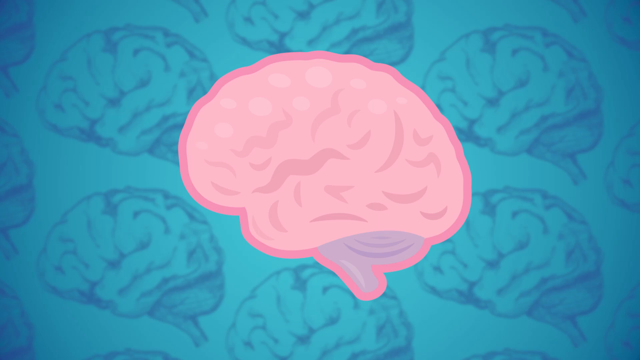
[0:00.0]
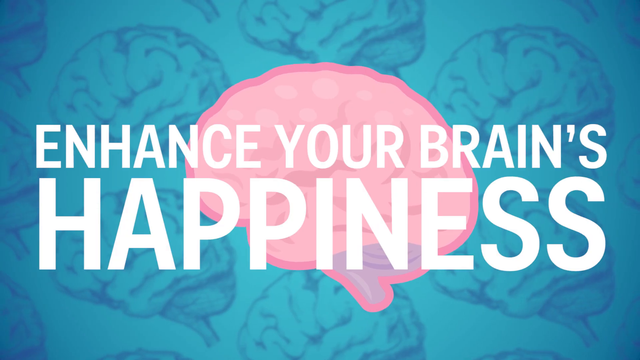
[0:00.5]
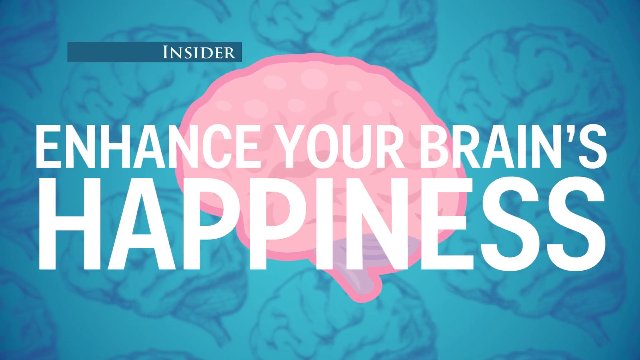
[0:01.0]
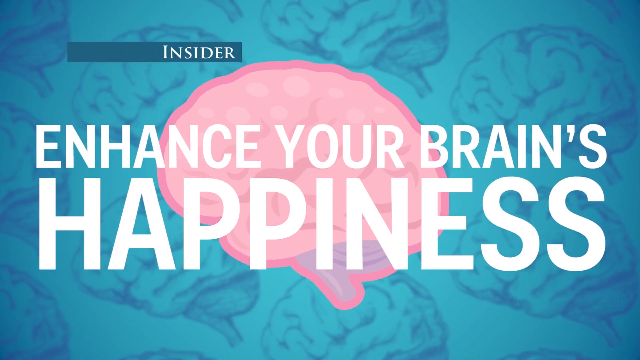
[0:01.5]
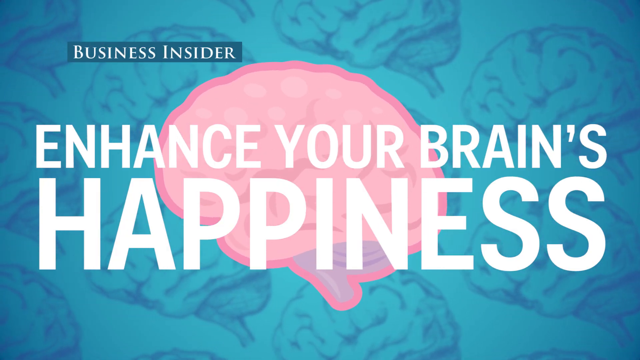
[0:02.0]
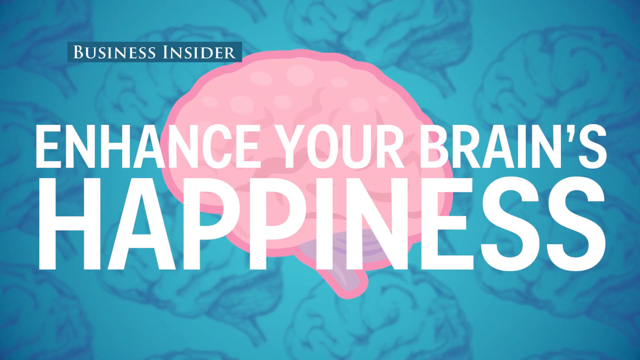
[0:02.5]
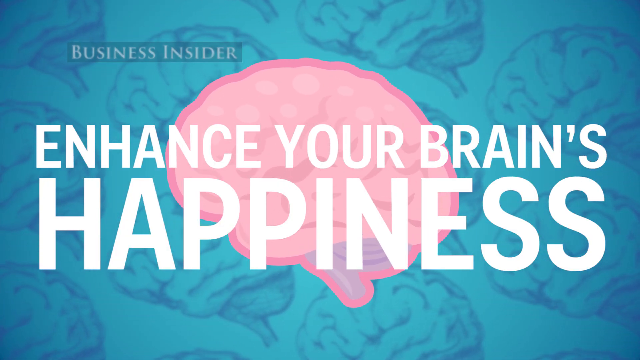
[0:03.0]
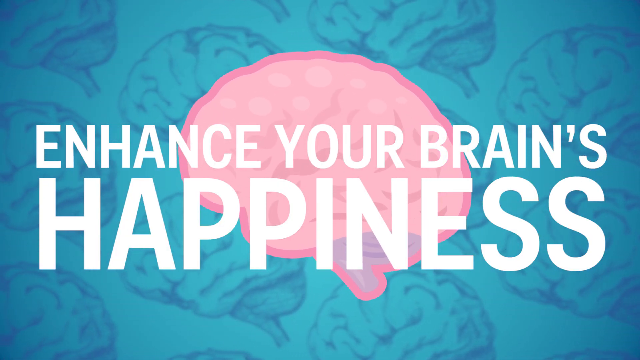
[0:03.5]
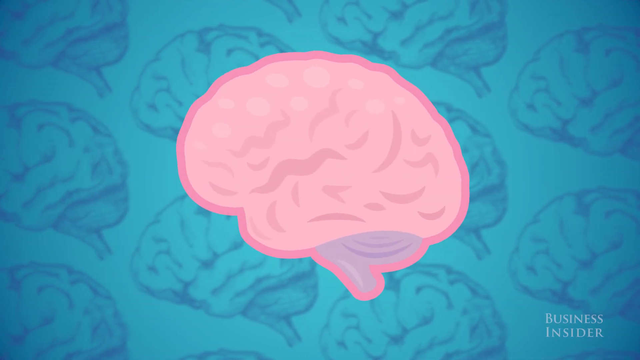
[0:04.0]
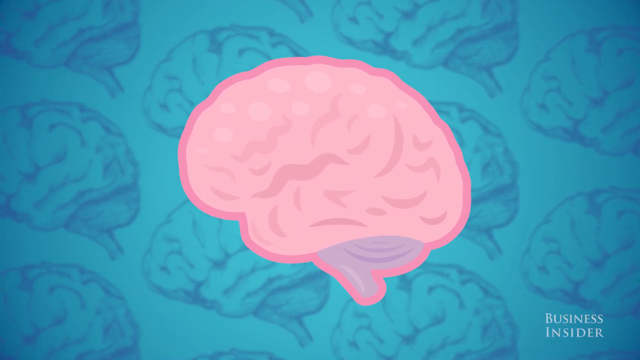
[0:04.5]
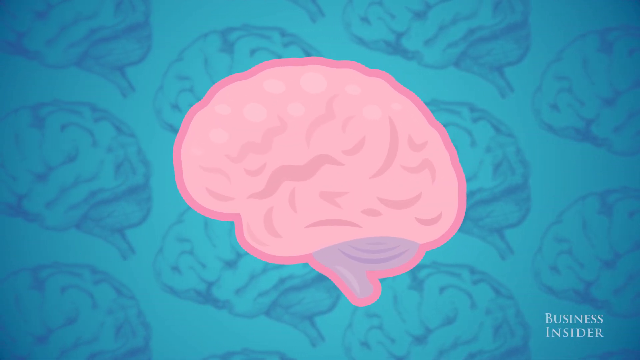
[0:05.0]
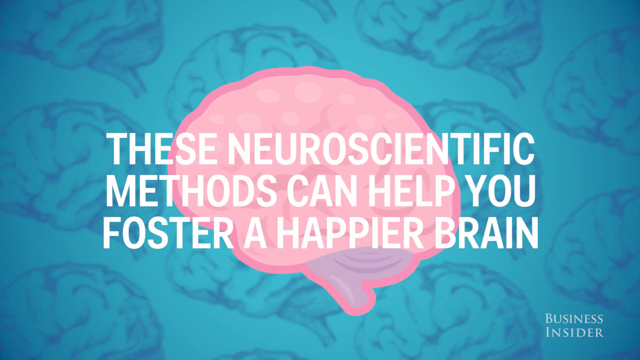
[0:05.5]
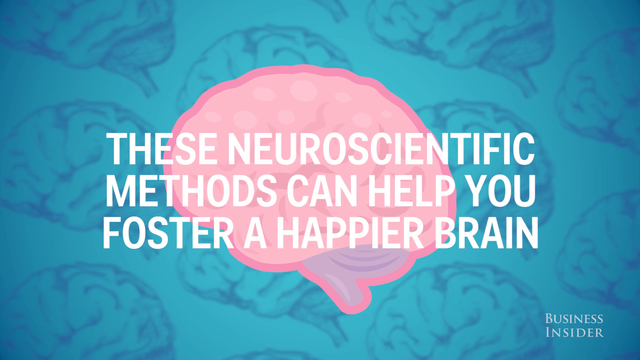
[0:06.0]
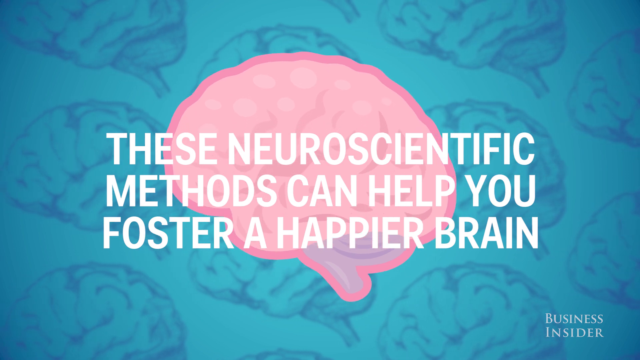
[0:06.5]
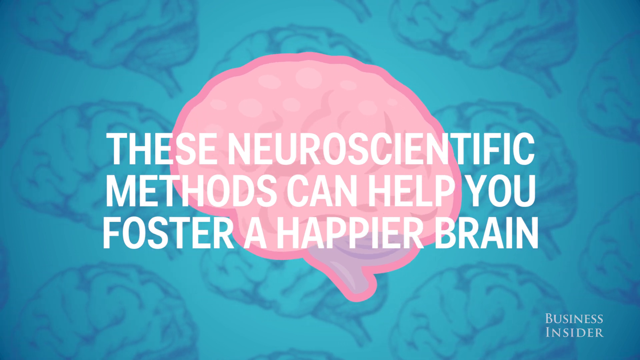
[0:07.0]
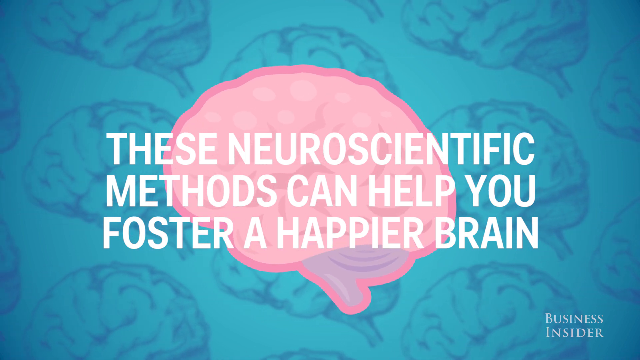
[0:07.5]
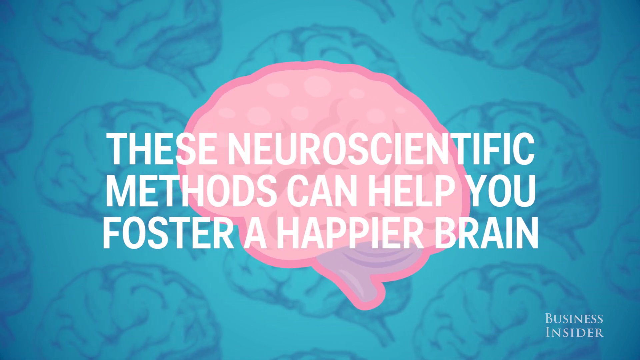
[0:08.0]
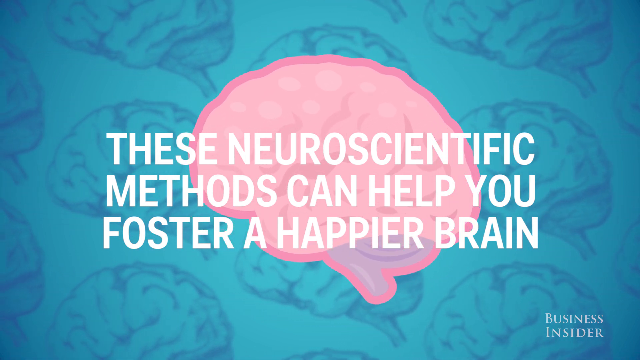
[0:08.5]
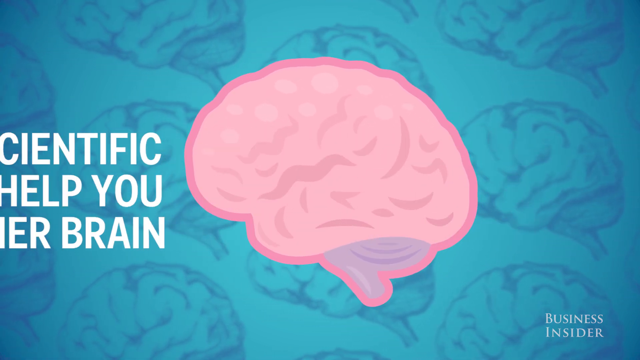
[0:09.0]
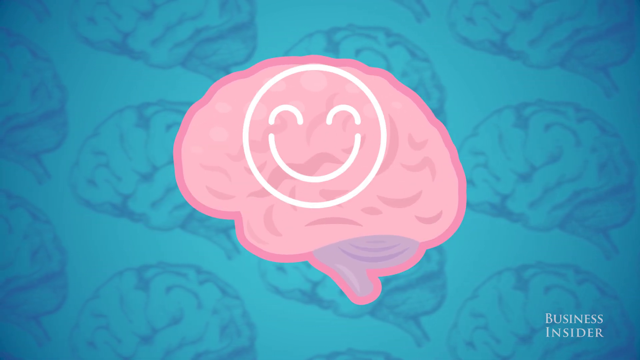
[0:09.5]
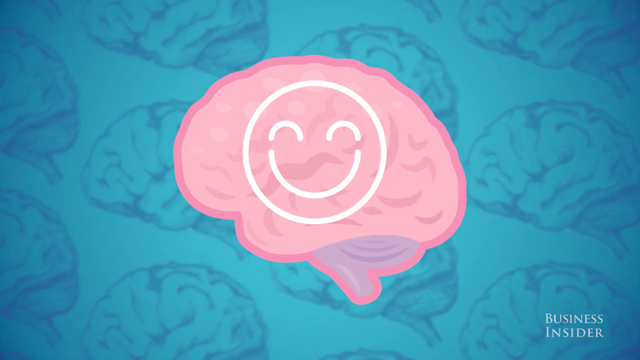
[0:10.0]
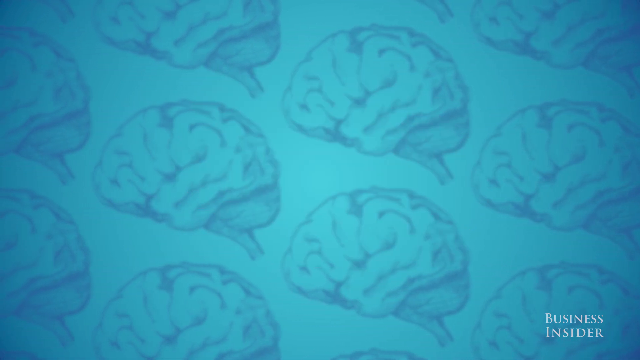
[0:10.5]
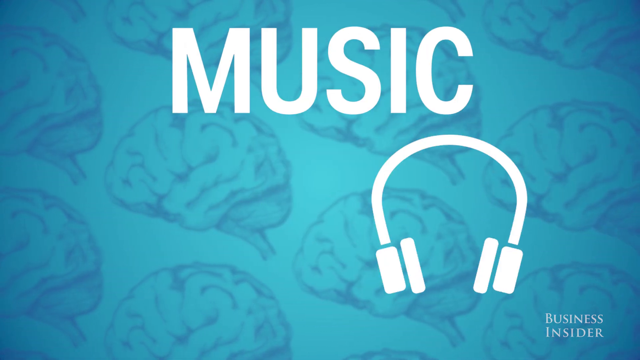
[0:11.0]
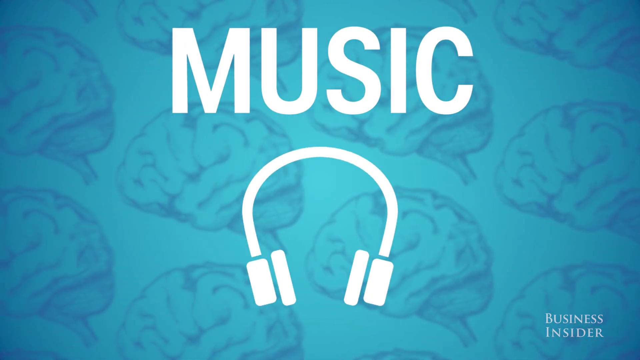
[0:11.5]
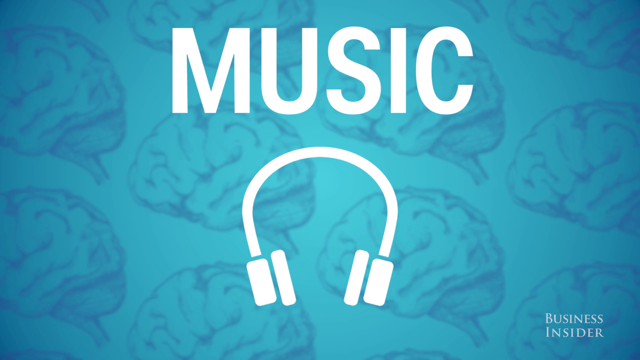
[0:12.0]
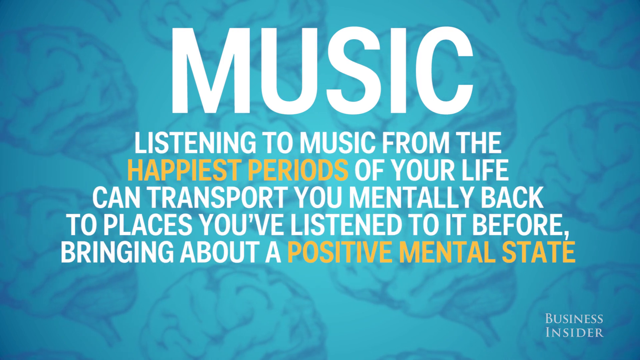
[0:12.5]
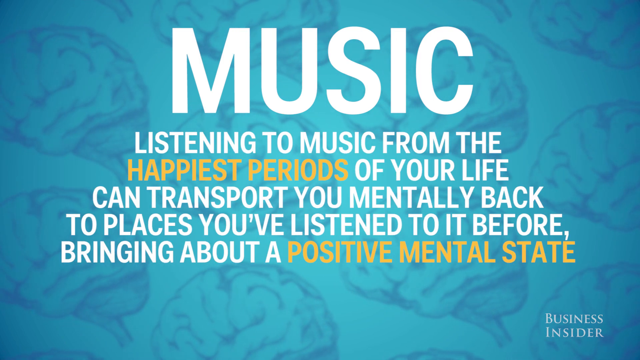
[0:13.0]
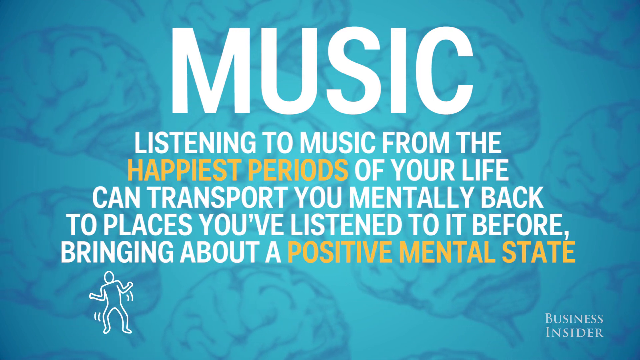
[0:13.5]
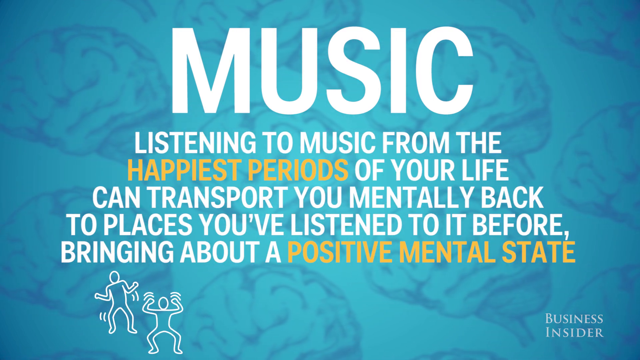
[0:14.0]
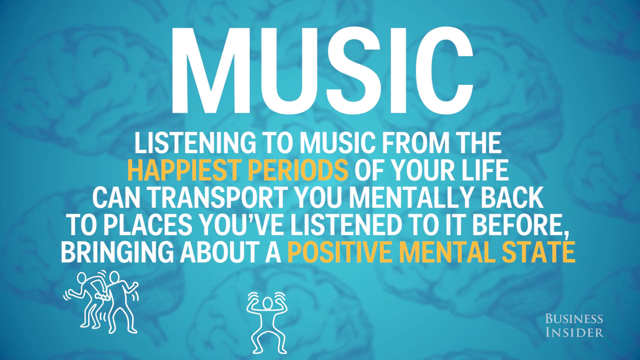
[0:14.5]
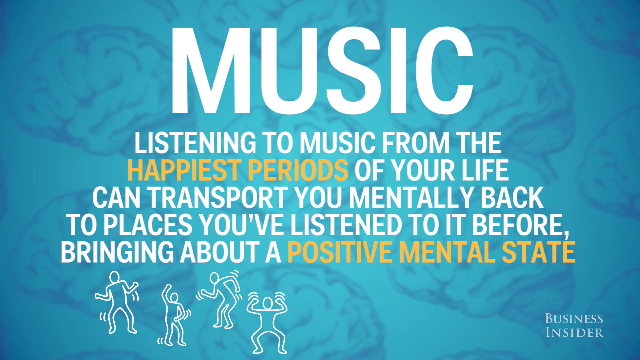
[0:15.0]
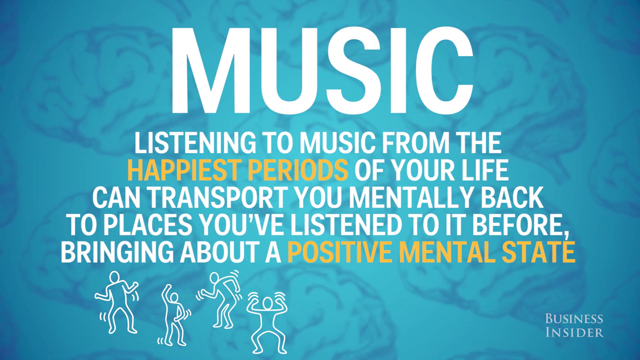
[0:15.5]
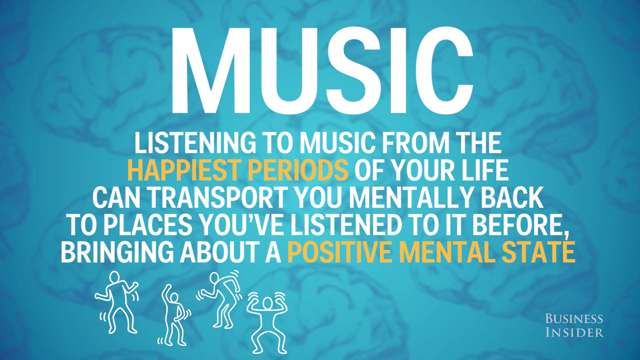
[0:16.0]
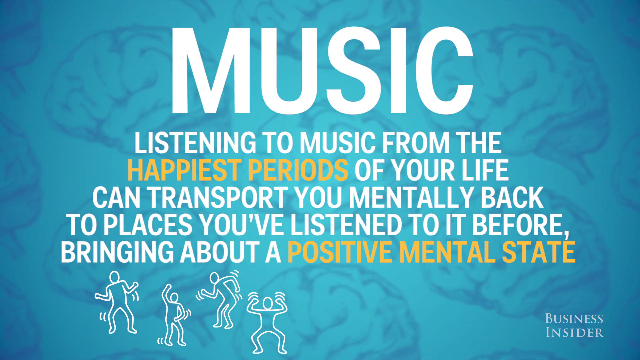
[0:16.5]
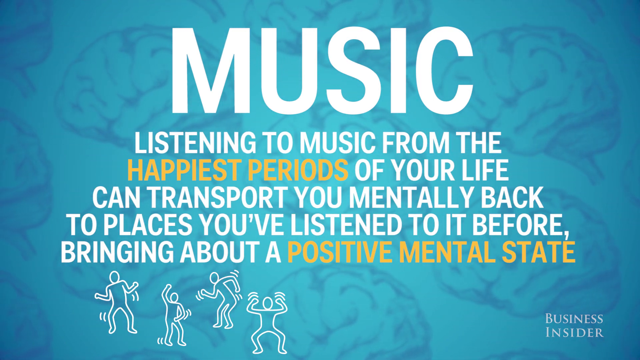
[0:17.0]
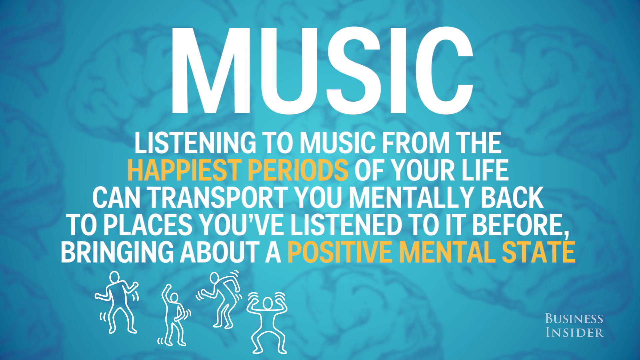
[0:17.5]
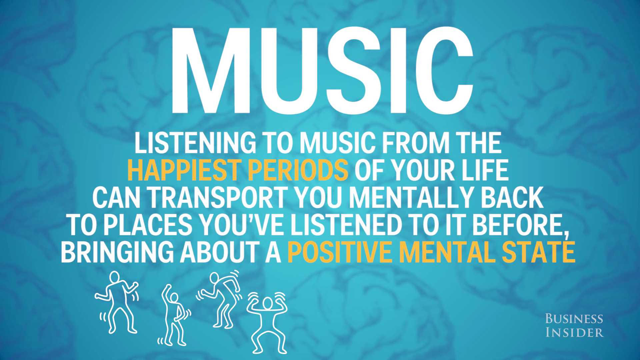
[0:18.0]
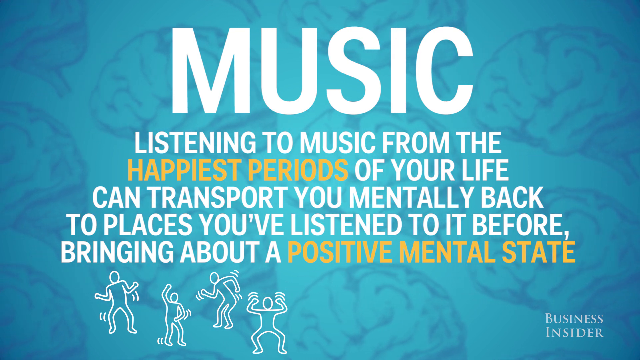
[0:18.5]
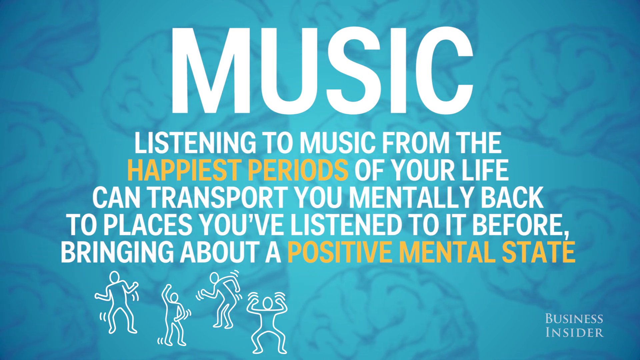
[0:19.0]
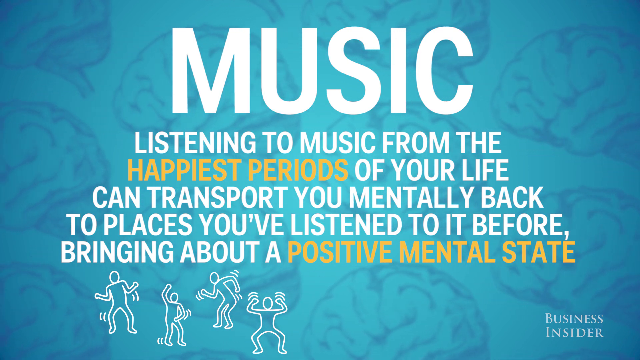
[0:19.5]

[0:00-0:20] A computer-generated drawing of a pink brain appears against a blue background, with at least six blue brains visible in full or partly cut off in the background and even more cut off in the corners. The pink brain is outlined in a darker shade of pink, and its bottom part is a pale purple, almost a purple with a tinge of gray. The title appears in white letters: "Enhance Your Brain's Happiness", along with "Business Insider". Next, white capital letters on the screen read "These Neuroscientific Methods Can Help You Foster a Happier Brain", with the pink brain and the blue background of blue brains still there. A white smiley face pops on screen, drawn in front of the pink brain. The word "MUSIC" then appears in big white capital letters with a white headphones icon below it. Below "MUSIC", capital letters read "Listening to Music from the Happiest Periods of Your Life Can Transport You Mentally Back to Places You've Listened to It Before, Bringing About a Positive Mental State", with "HAPPIEST PERIODS" and "POSITIVE MENTAL STATE" in yellow. Below are four icons of people dancing and looking happy, drawn very primitively rather than realistically. This screen also has the pink brain with blue brains in the background.